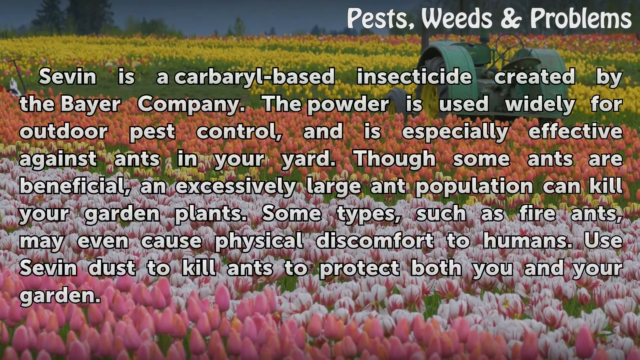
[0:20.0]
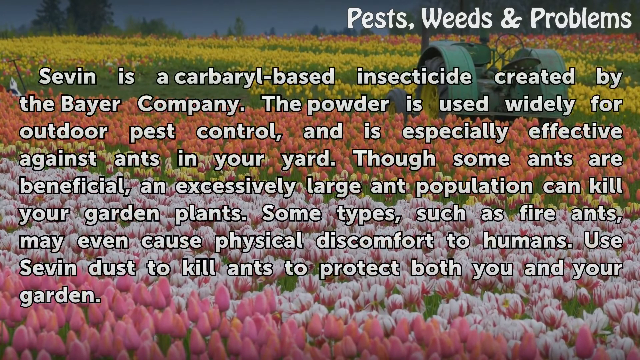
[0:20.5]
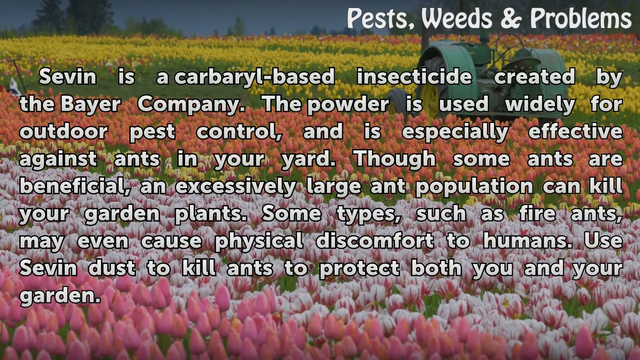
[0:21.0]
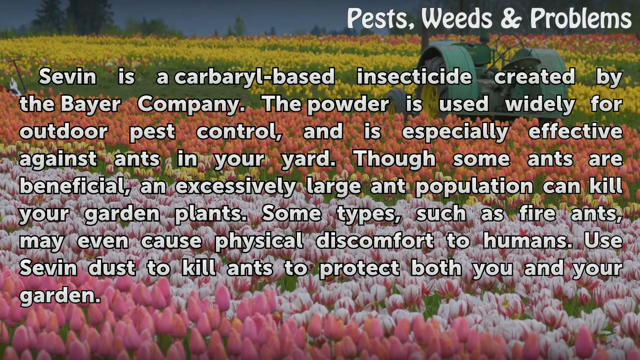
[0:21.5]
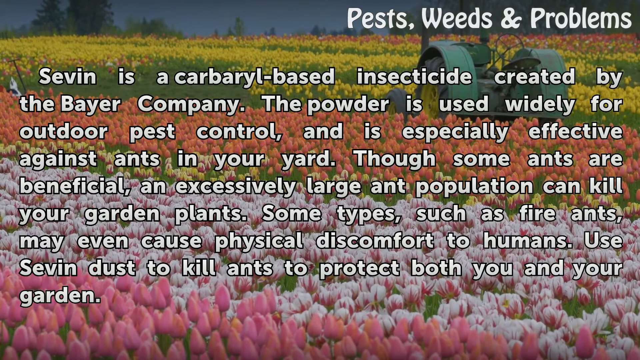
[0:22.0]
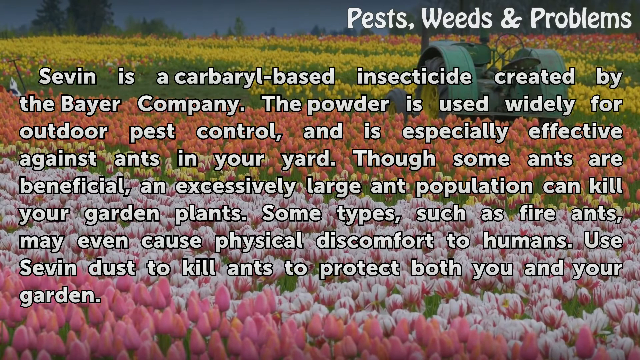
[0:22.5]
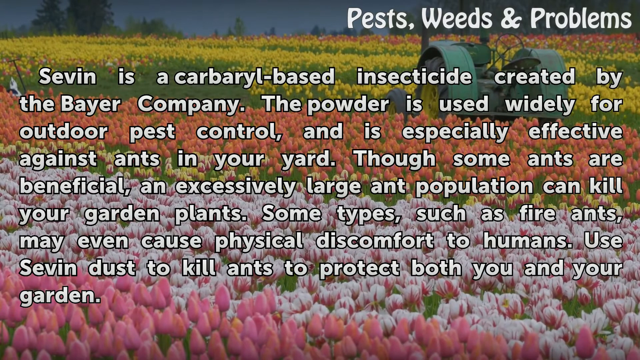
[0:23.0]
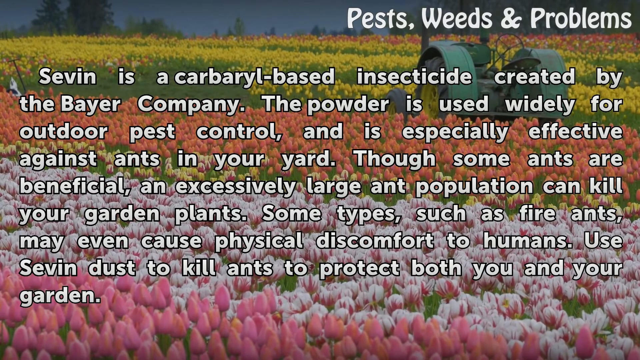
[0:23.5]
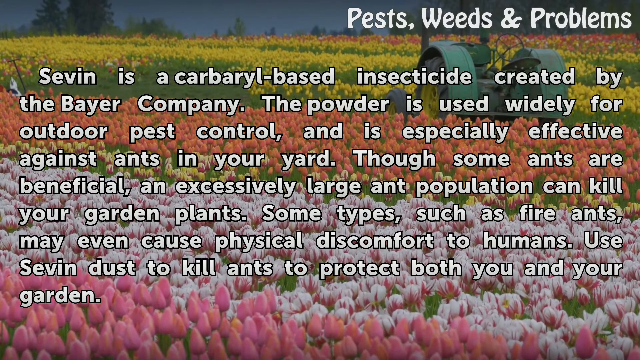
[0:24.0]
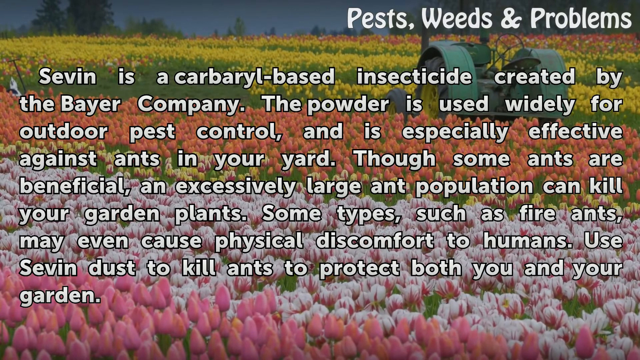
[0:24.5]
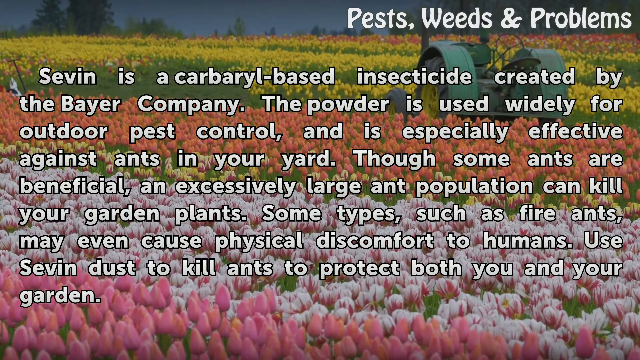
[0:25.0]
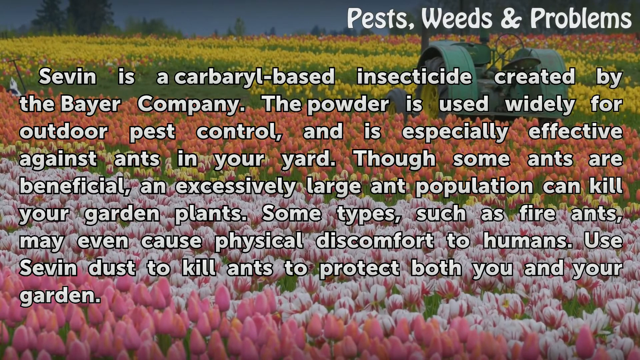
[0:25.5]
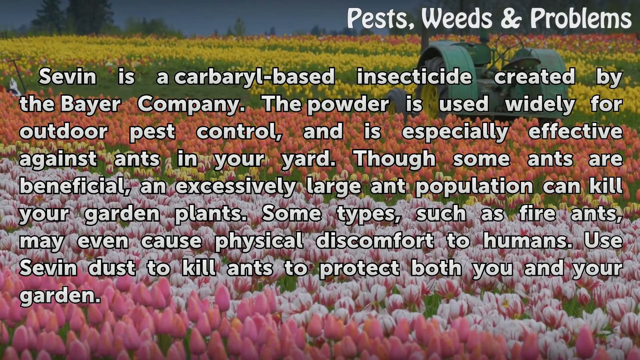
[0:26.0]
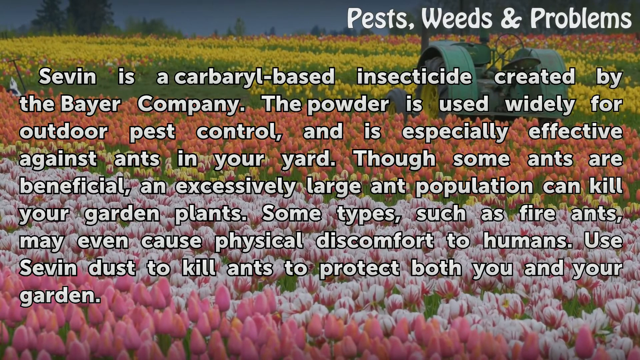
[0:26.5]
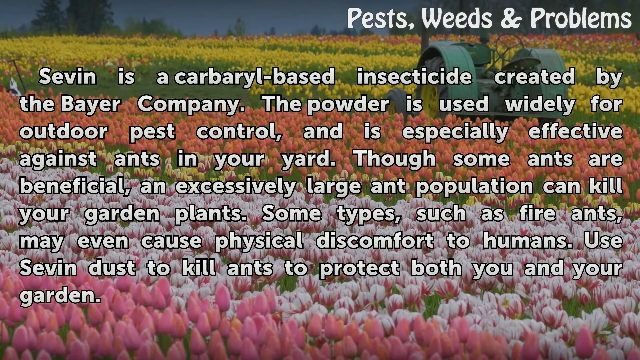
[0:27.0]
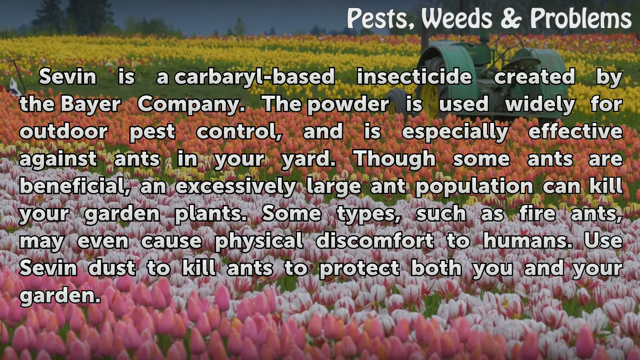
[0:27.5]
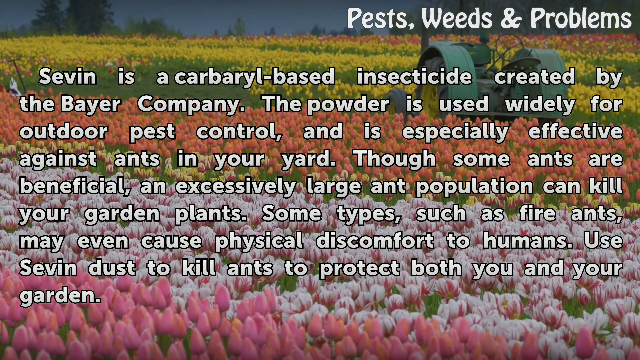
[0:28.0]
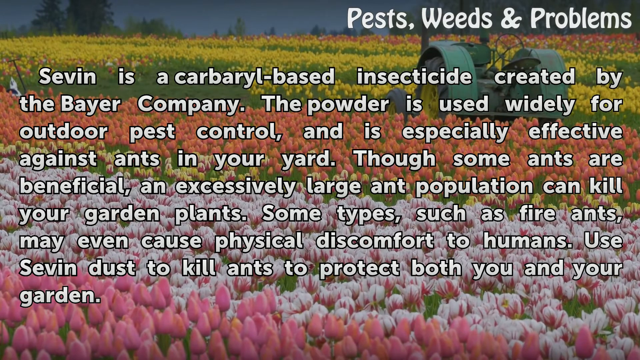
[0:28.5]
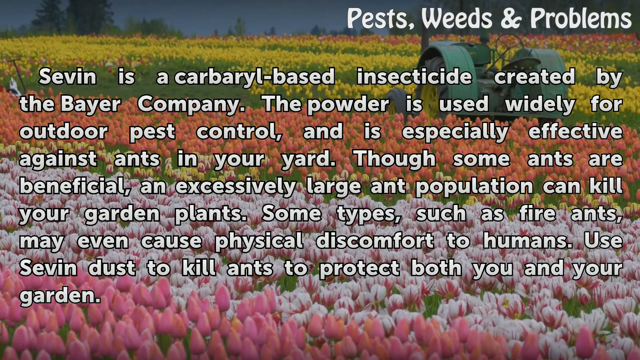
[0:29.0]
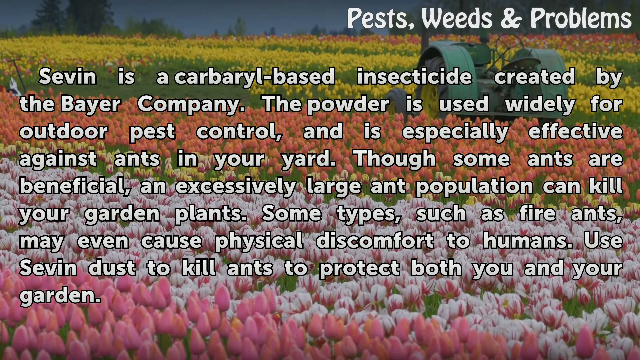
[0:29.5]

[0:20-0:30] White text with a black outline takes up the whole screen and reads: "SEVIN is a carbaryl-based insecticide created by the Bayer Company. The powder is used widely for outdoor pest control and is especially effective against ants in your yard. Though some ants are beneficial, an excessively large ant population can kill your garden plants. Some types, such as fire ants, may even cause physical discomfort to humans. Use SEVIN dust to kill ants to protect both you and your garden." This paragraph is underneath the text "pests weeds and problems" in the top right of the screen.